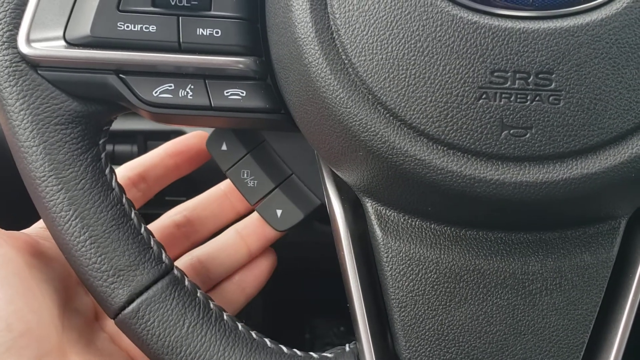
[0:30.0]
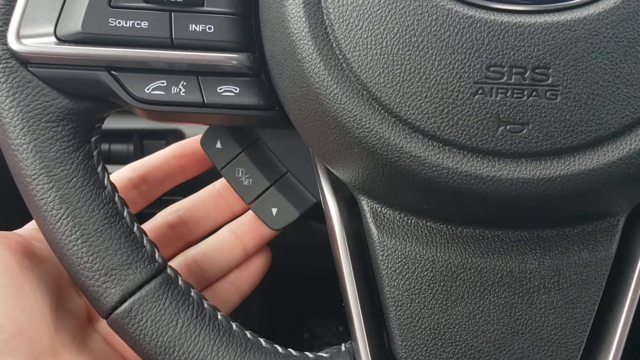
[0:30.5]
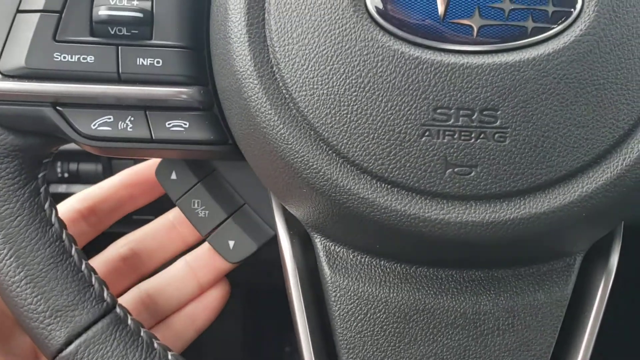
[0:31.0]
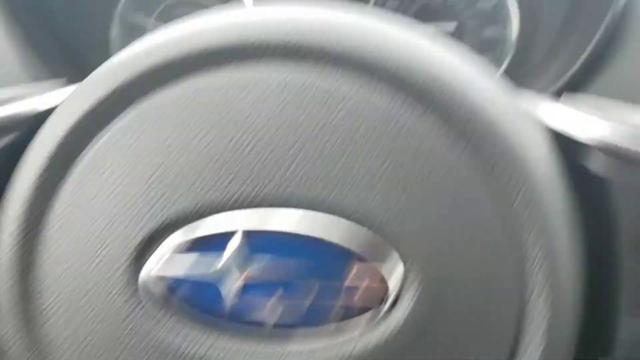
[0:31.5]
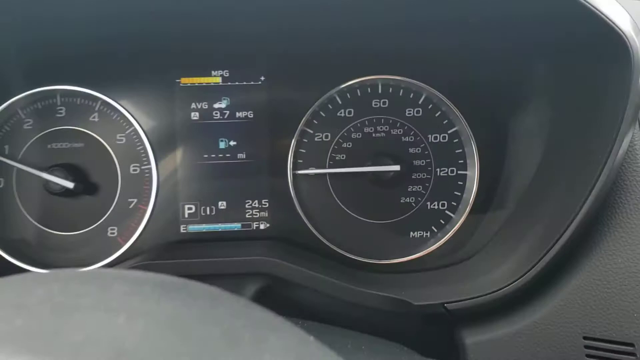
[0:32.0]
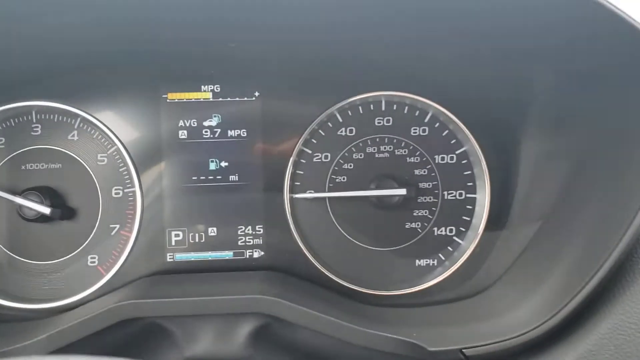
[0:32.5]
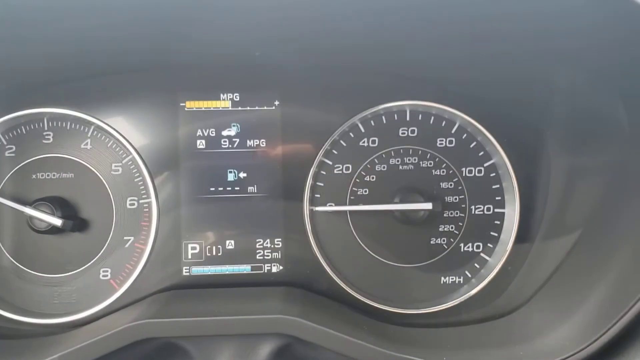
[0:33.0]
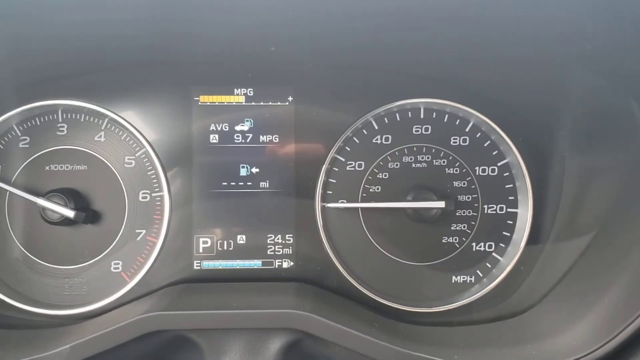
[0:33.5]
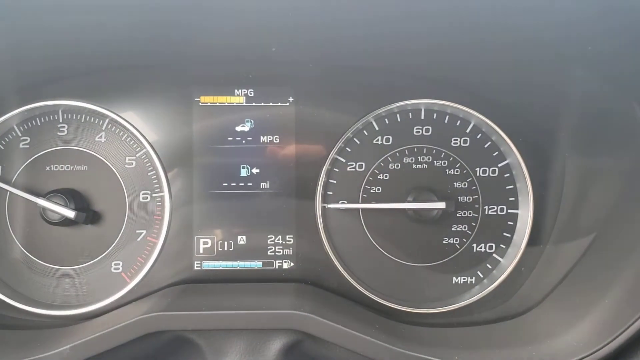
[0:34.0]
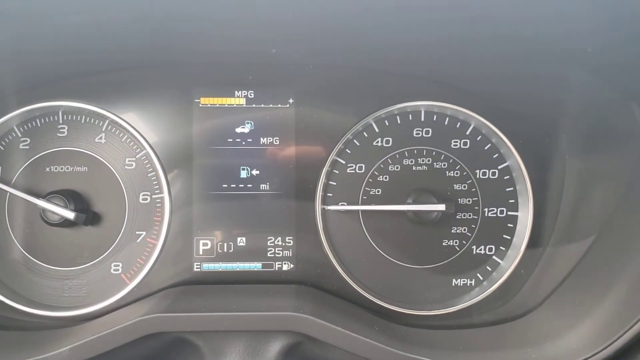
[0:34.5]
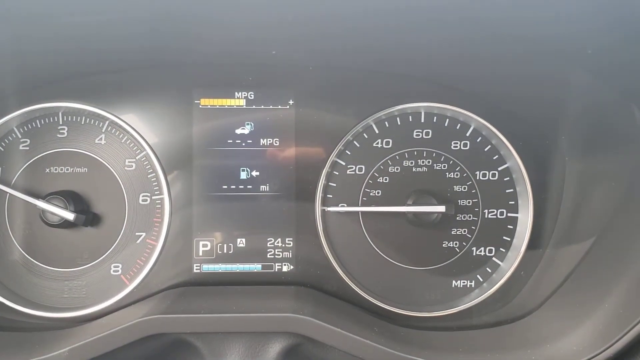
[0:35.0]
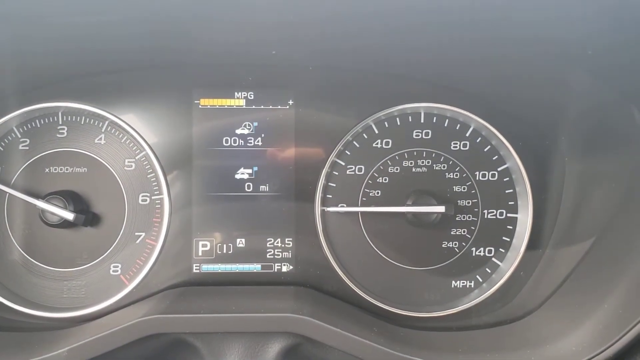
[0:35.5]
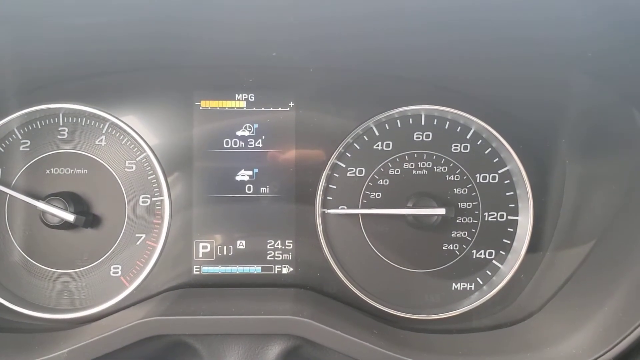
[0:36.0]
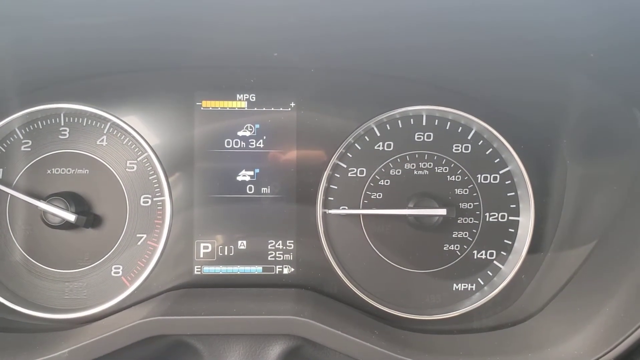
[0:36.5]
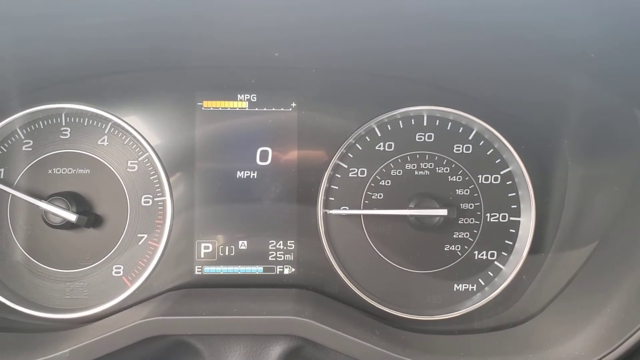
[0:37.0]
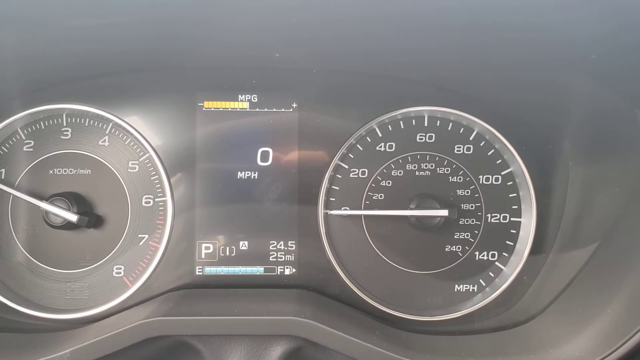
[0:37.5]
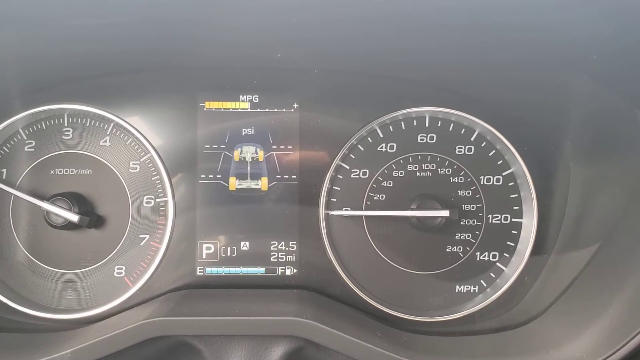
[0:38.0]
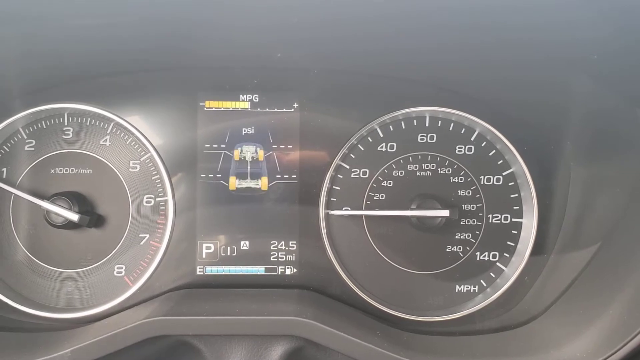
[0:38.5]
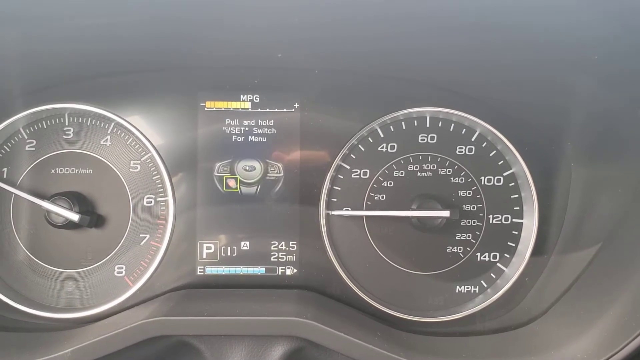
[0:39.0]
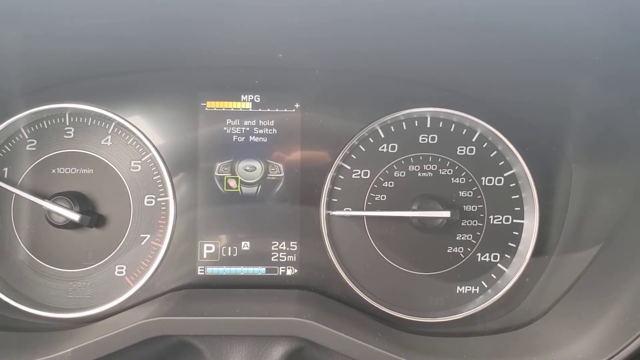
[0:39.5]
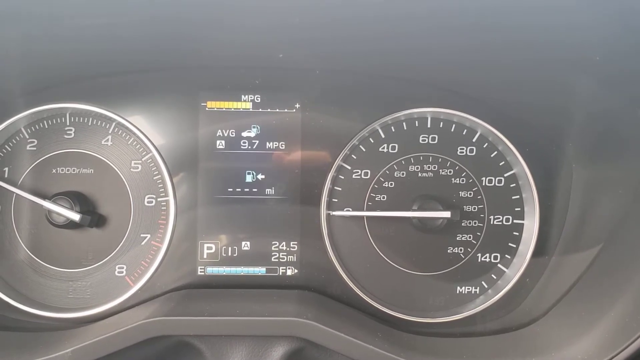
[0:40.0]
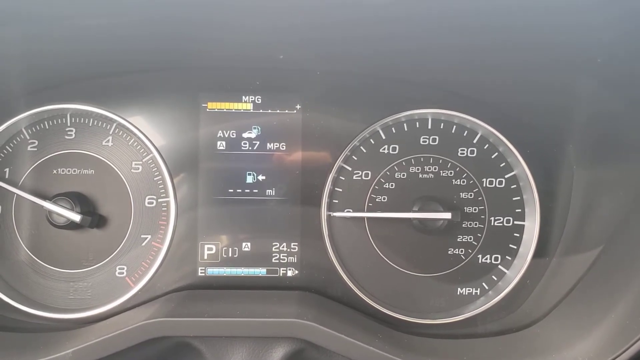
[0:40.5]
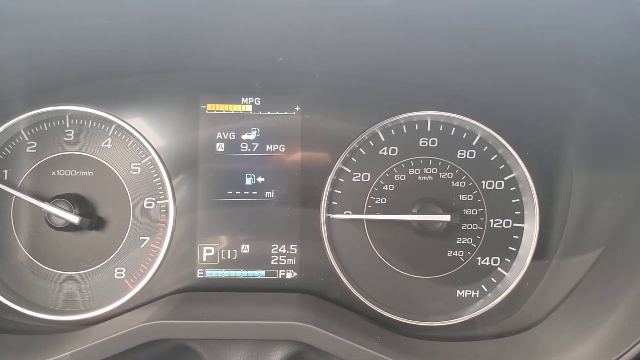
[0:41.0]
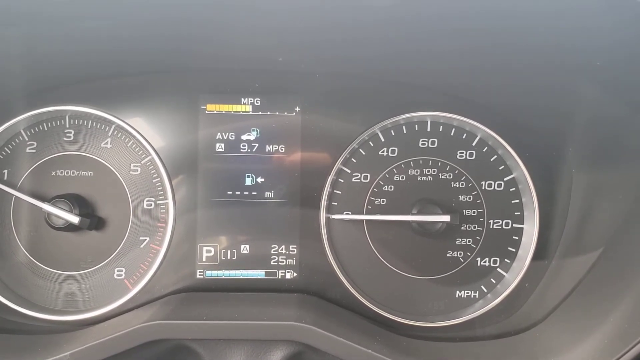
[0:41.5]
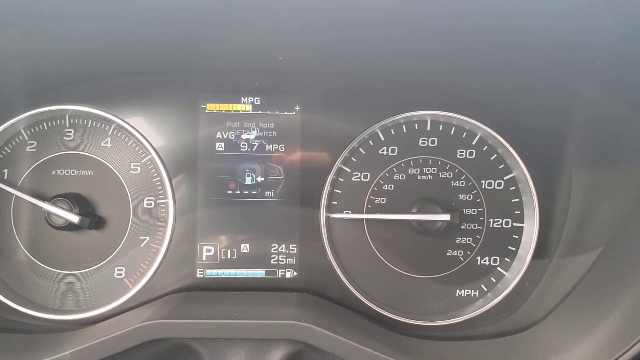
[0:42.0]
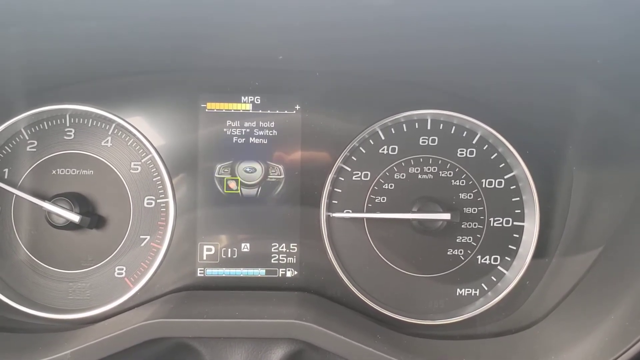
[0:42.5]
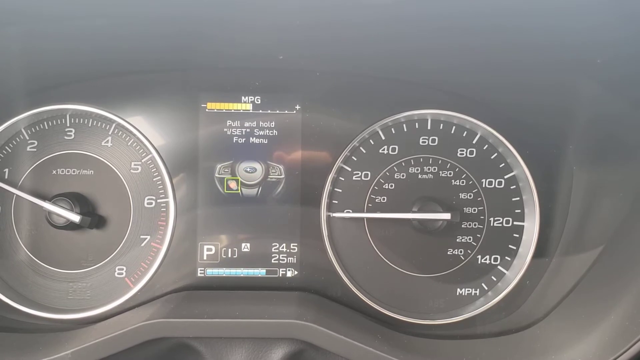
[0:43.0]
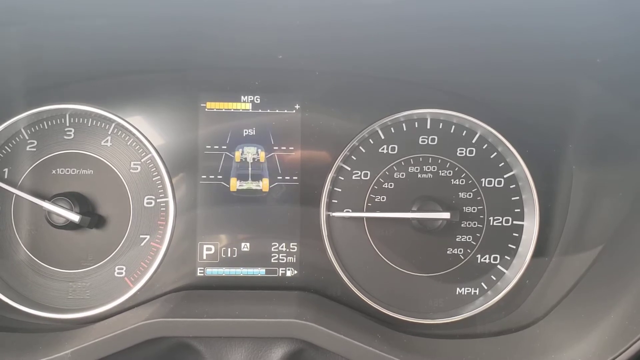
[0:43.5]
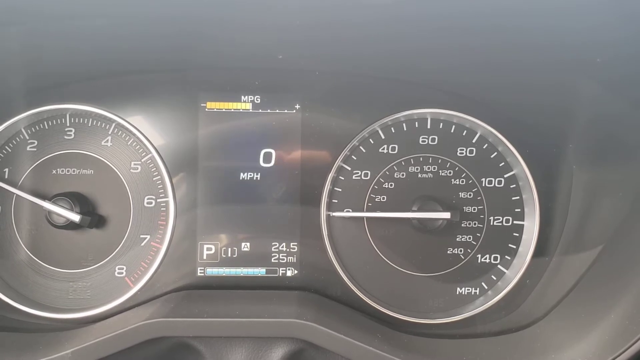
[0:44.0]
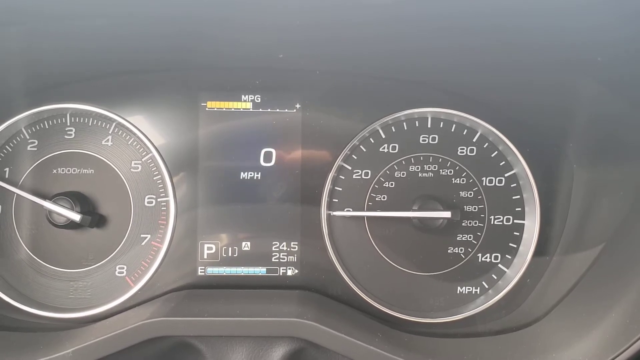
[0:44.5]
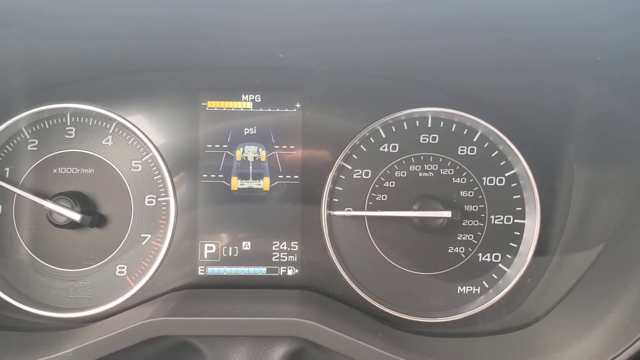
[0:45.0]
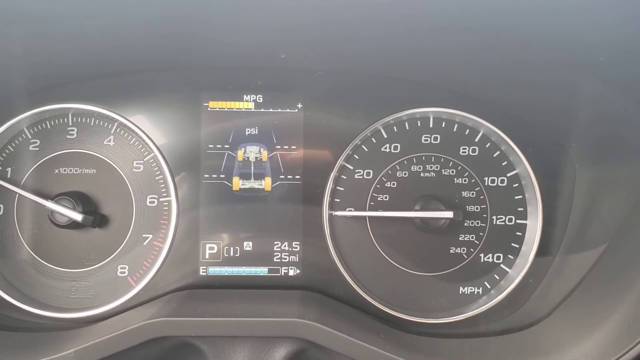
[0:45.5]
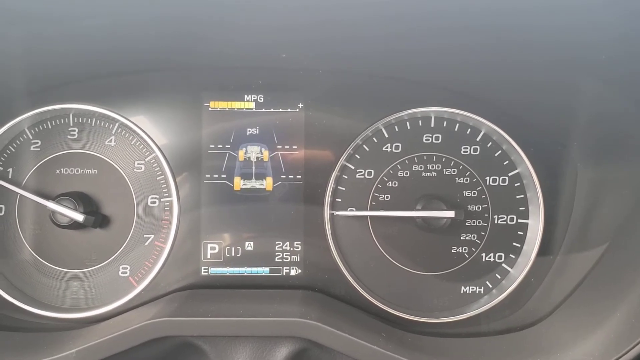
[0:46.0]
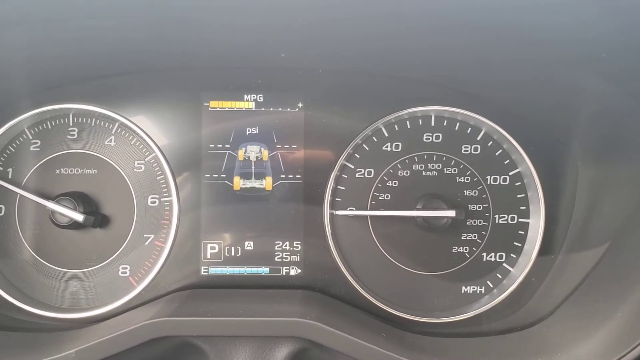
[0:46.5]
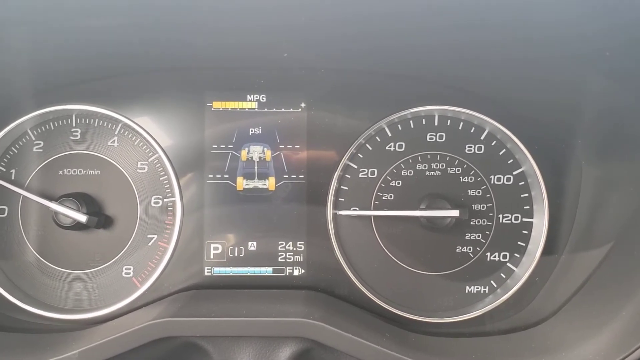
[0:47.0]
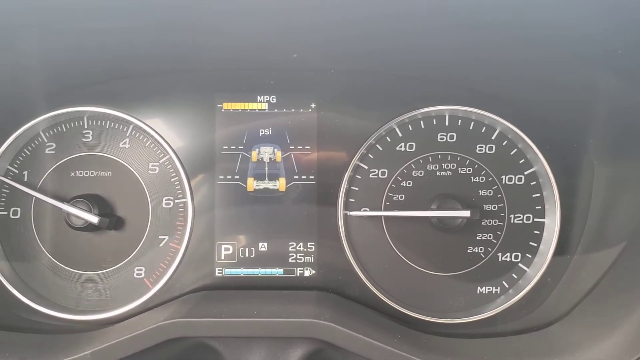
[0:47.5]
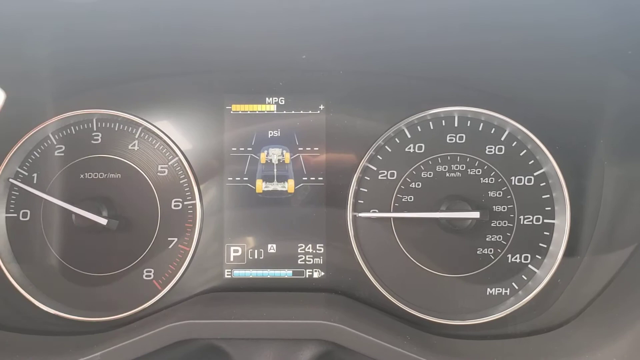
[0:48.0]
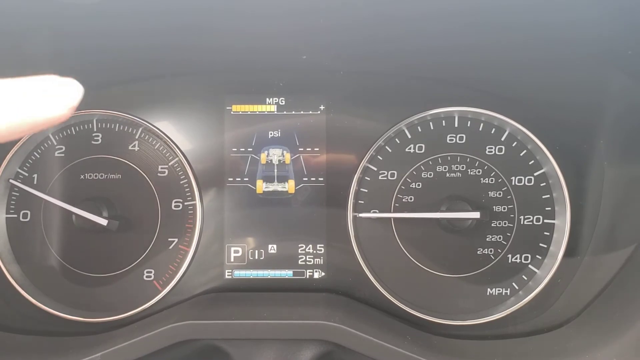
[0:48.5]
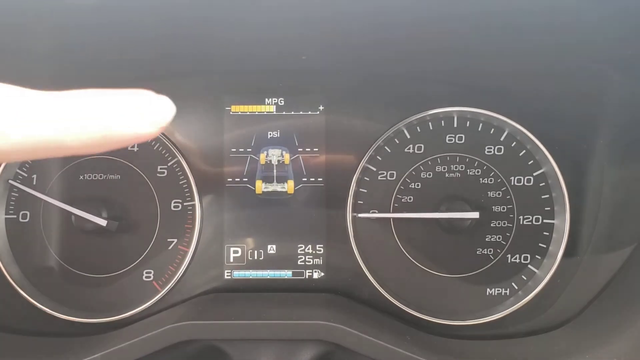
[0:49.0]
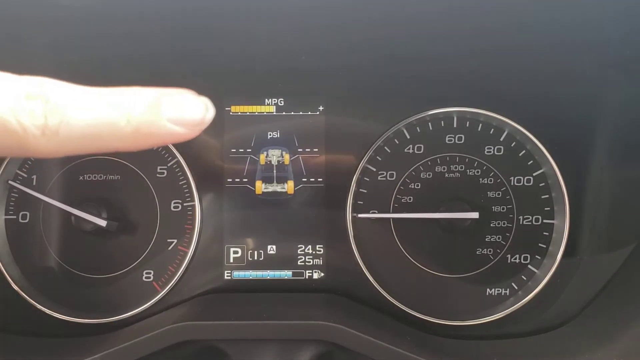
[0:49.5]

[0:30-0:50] The person's left hand touches buttons with the pinky, pointer, middle and ring fingers. The buttons are on the bottom left-hand side. When he presses them, the MPG area changes: it says "mpg 0", shows the layout of the car, and says "average 9.7 mpg", showing different details of the car. It seems to be an instructional video. Then the pointer finger of his left hand points at the digital screen between the two meters that says "MPG".